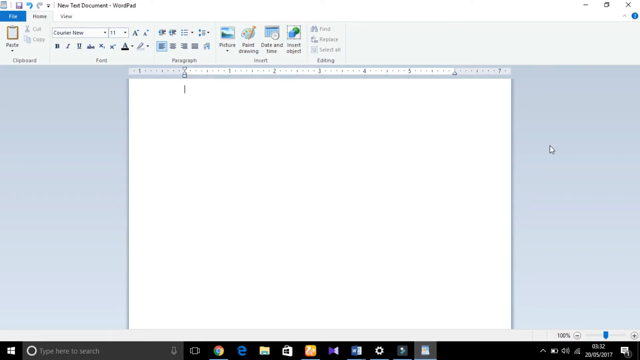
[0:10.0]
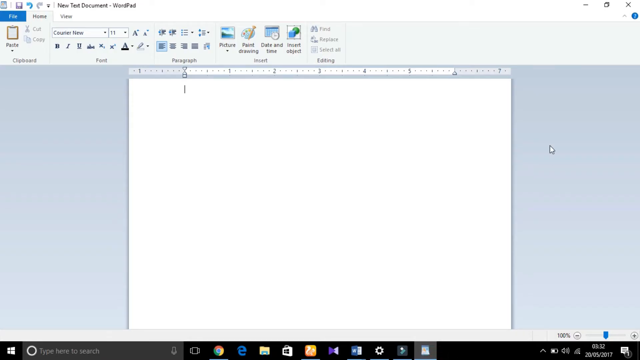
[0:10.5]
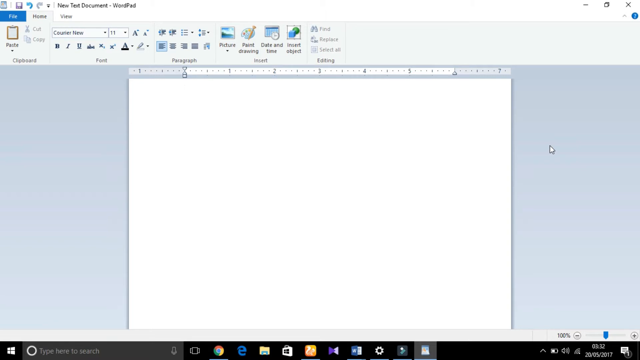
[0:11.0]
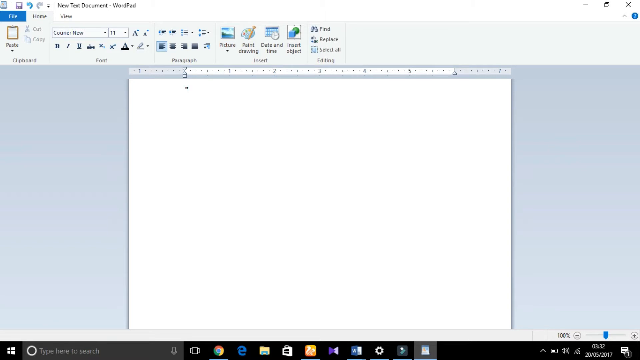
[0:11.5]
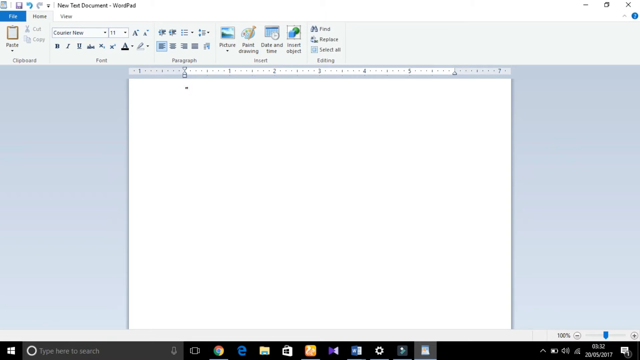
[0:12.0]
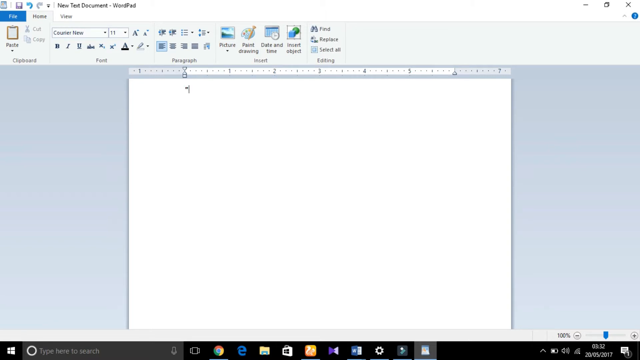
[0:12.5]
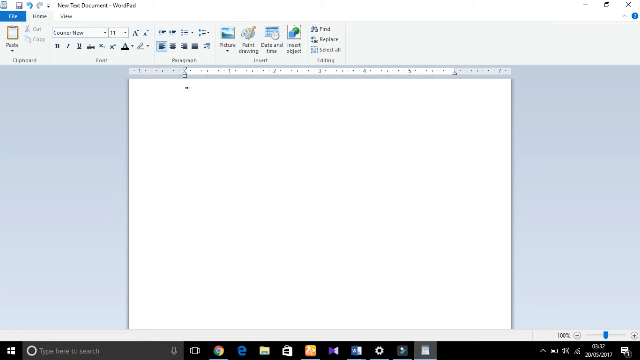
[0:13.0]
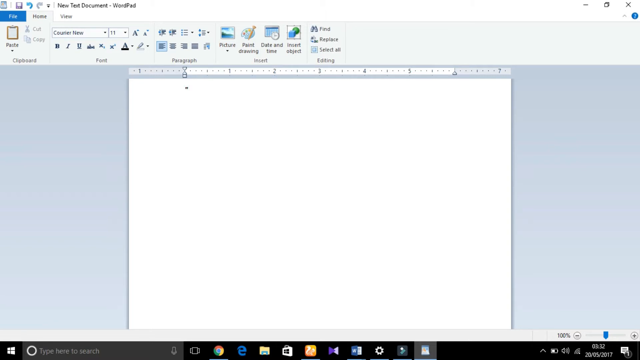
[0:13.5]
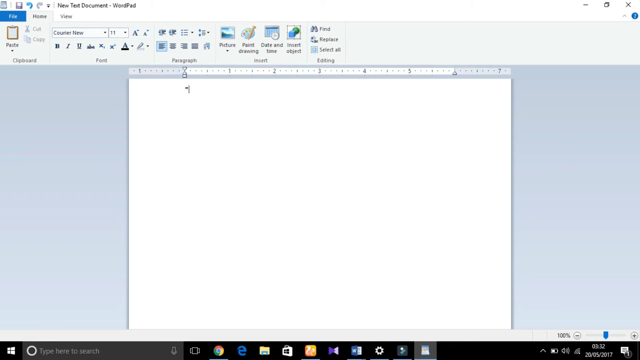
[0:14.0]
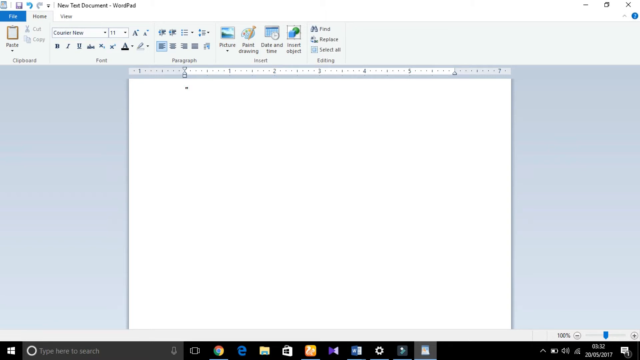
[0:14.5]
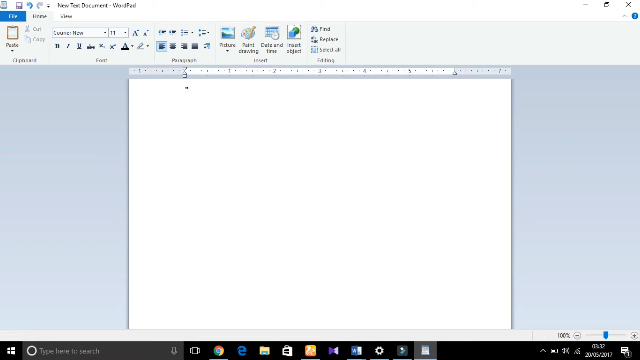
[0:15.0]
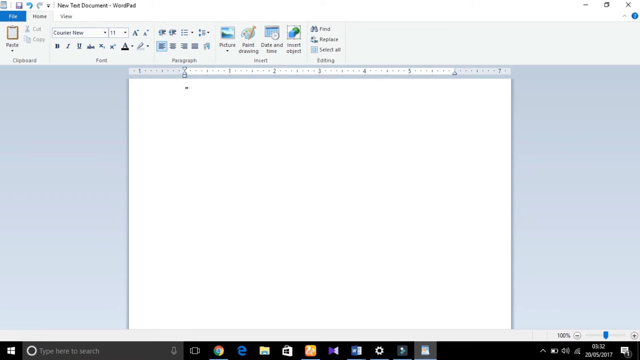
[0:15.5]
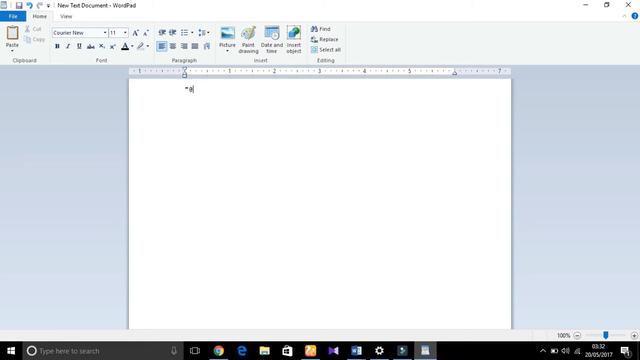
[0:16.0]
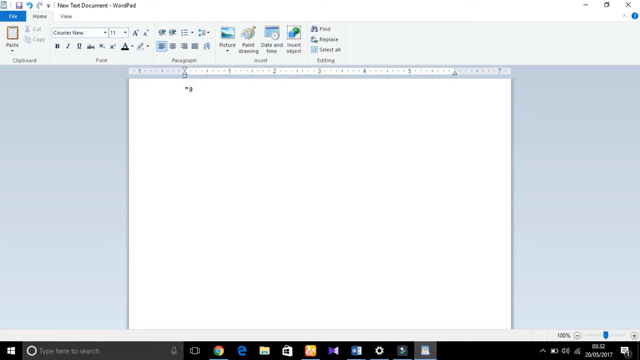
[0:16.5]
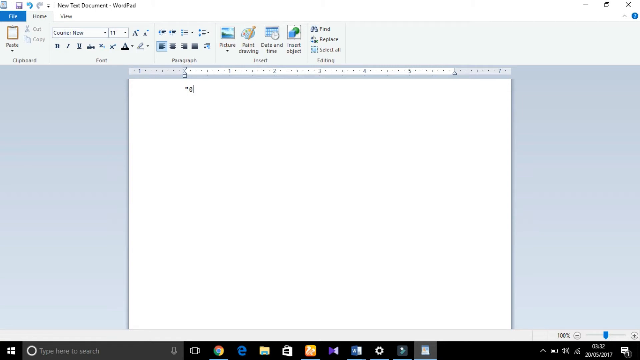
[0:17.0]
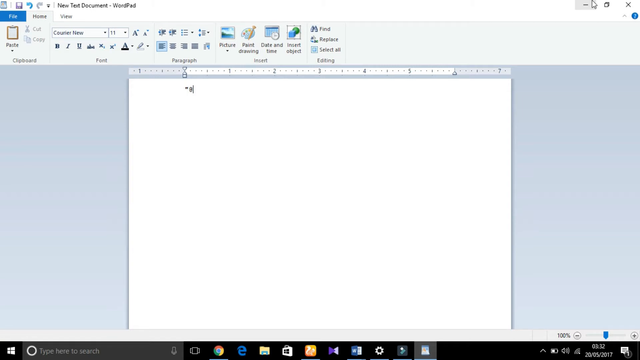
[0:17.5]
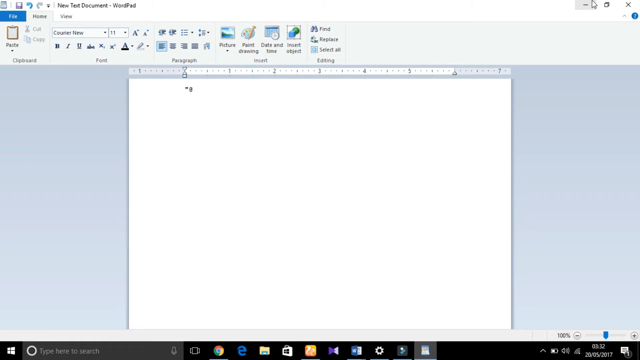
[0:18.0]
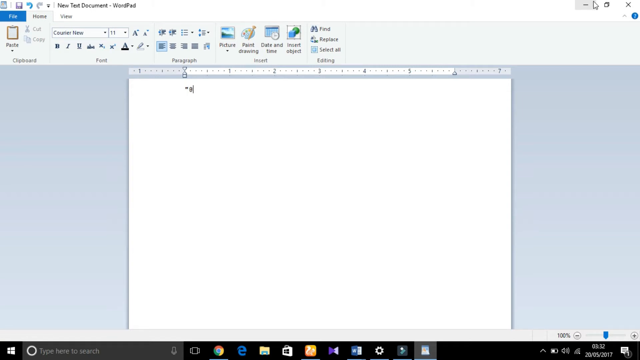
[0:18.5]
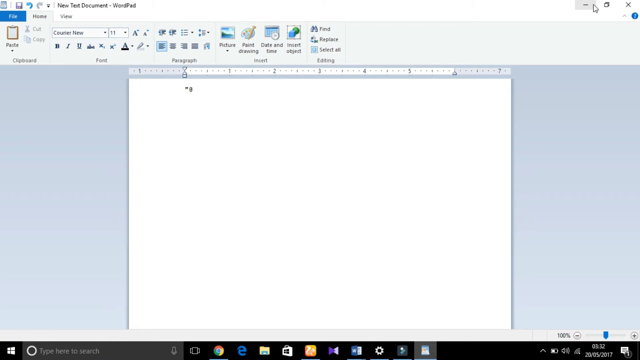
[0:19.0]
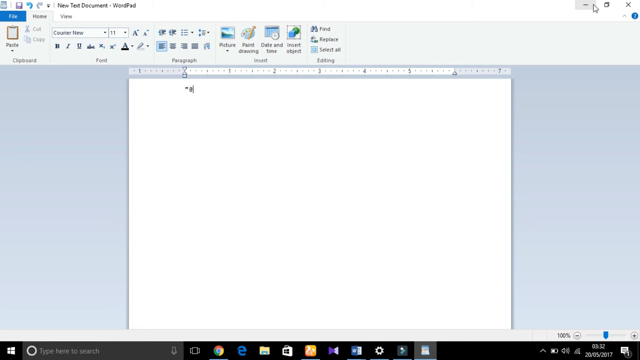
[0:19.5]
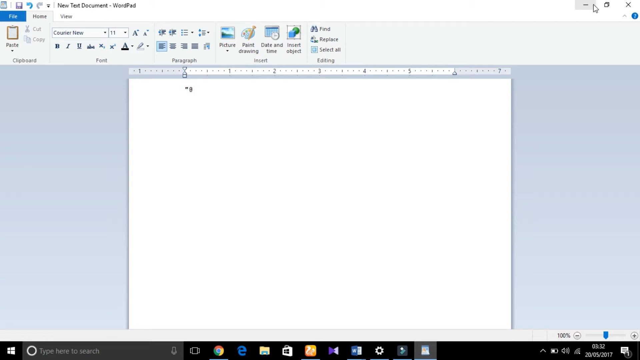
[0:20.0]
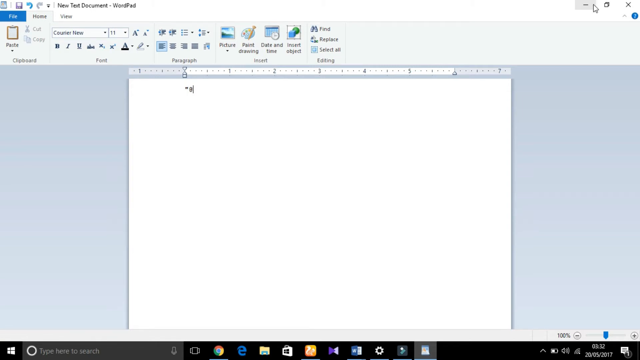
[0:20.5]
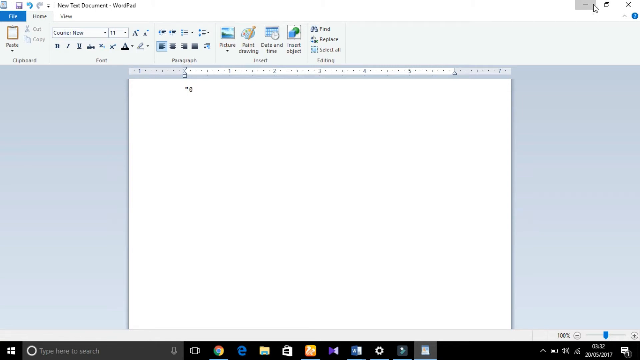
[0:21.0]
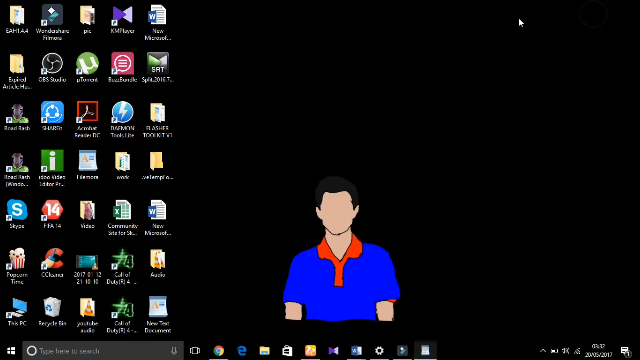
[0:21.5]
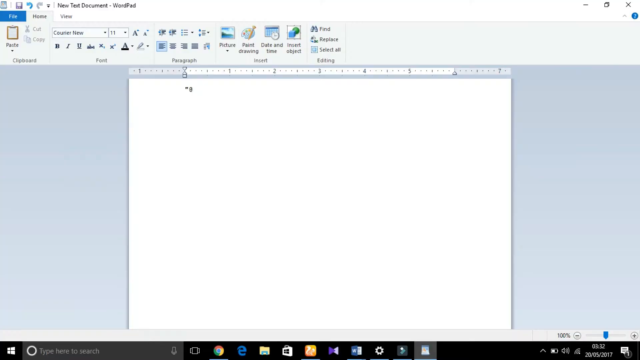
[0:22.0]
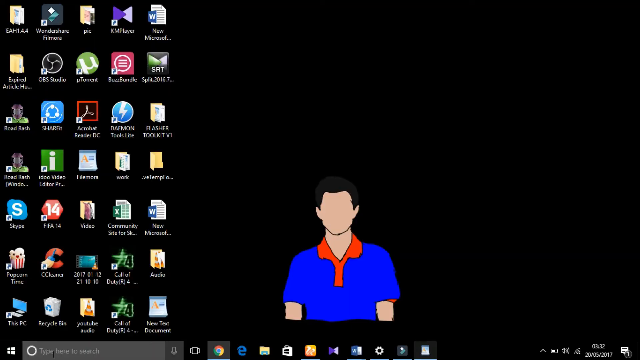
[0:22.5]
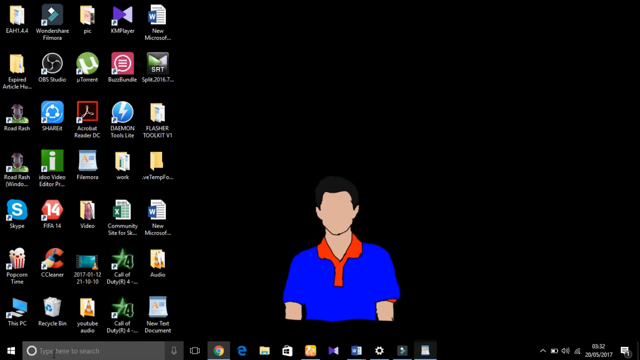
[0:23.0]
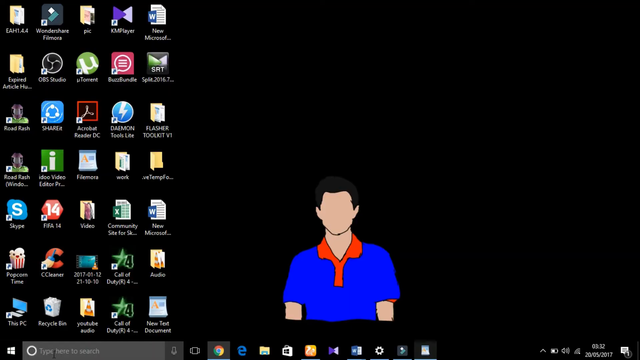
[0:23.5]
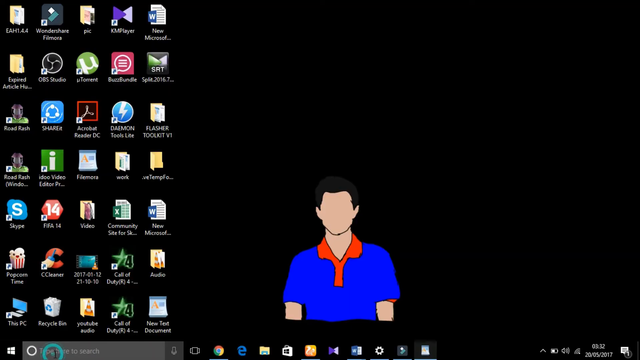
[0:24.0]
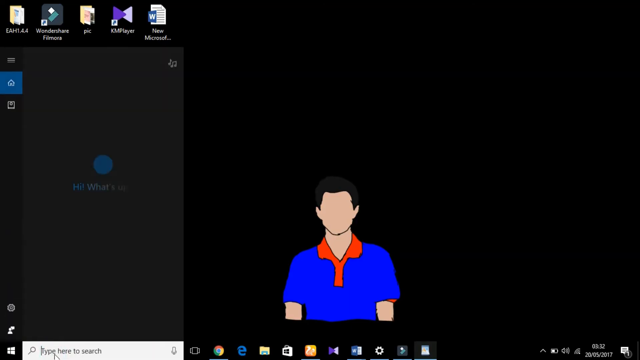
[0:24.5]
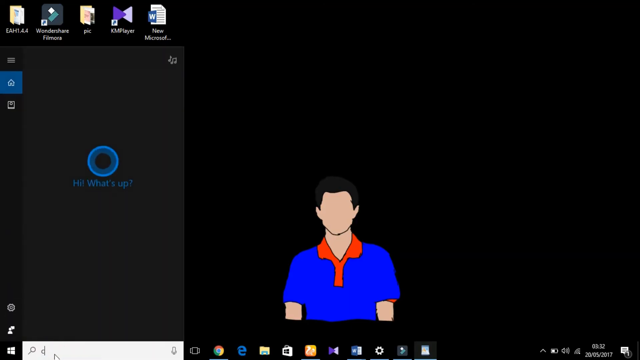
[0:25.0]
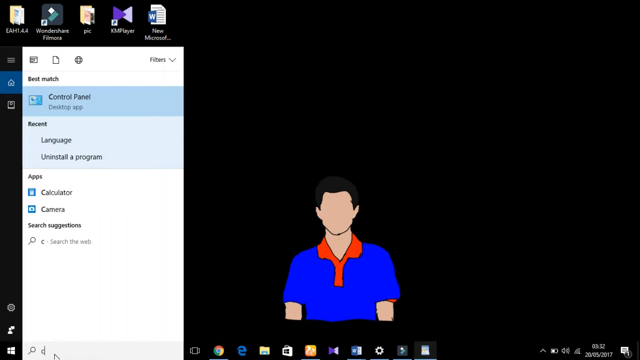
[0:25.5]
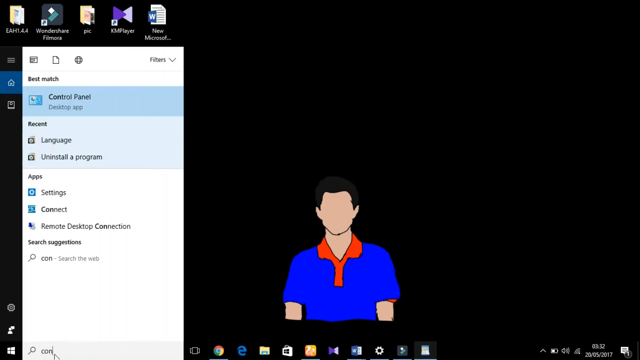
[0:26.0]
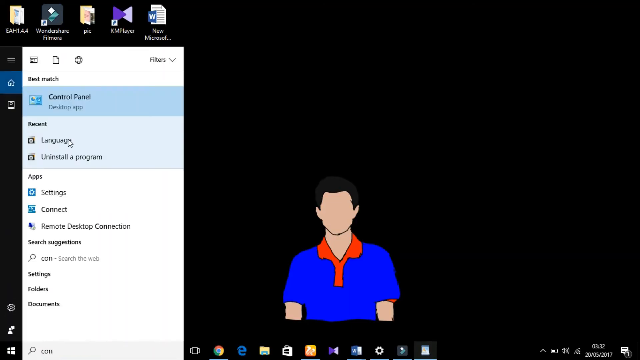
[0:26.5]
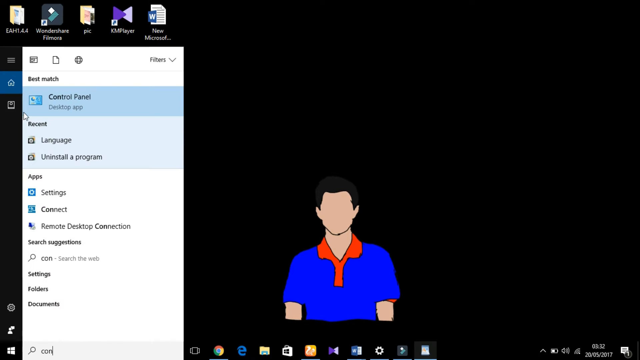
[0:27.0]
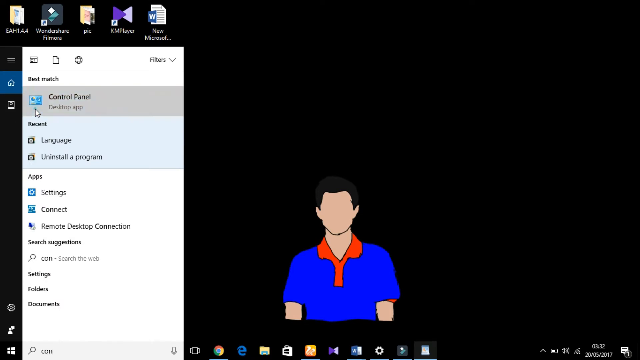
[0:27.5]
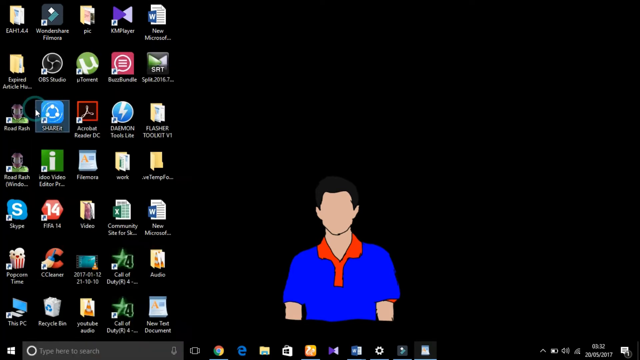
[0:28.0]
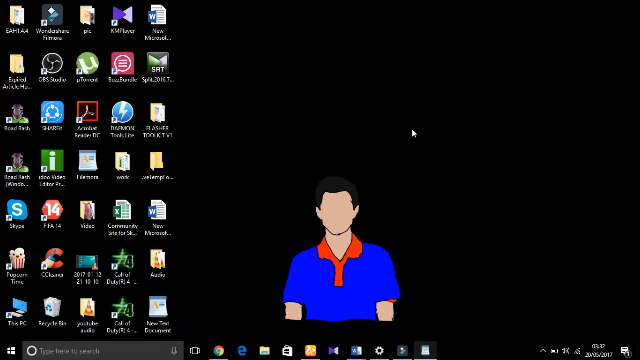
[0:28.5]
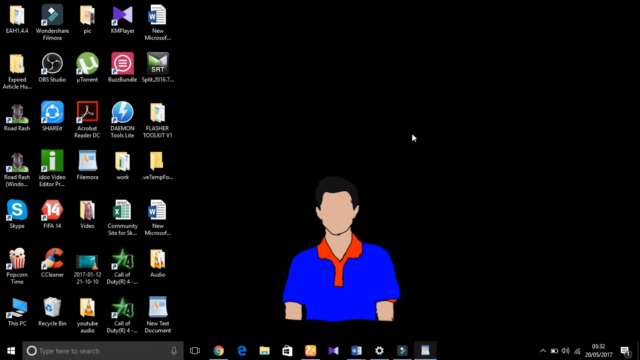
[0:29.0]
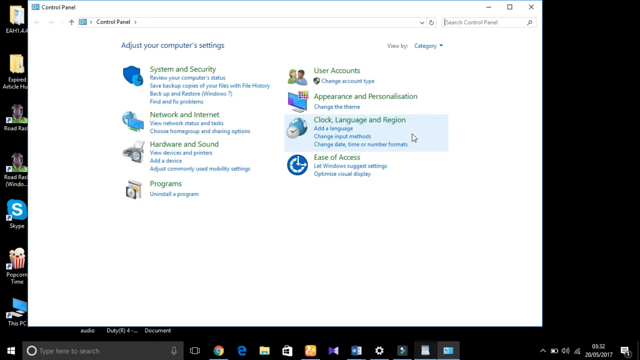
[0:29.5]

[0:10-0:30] The cursor blinks in the document, and quotation marks are typed, followed by what looks like the at symbol. The cursor moves to the minimize symbol in the upper right corner of the screen and the window is minimized. The cursor then slides over to the left side of the screen and clicks on something that looks like either I do video or FIFA 14, which disappears when clicked. The start window is opened, Control Panel is chosen, and Control Panel opens. The cursor moves around, but it is not visible what is being clicked on. When the cursor hovers over the icons on the left, by one that looks like share it, three rows down and the second one over, a blue circle like a halo goes around the cursor.